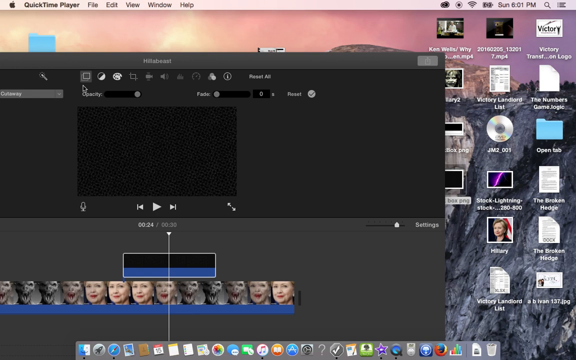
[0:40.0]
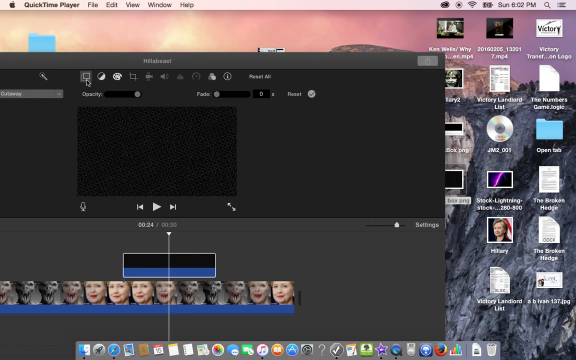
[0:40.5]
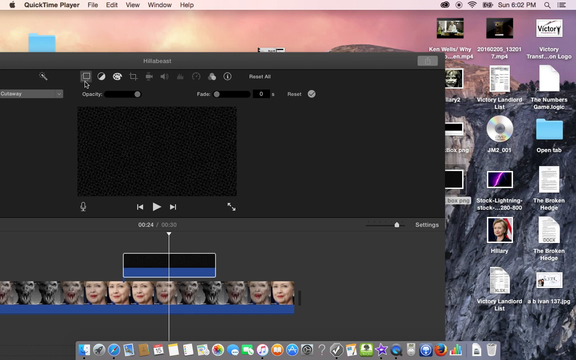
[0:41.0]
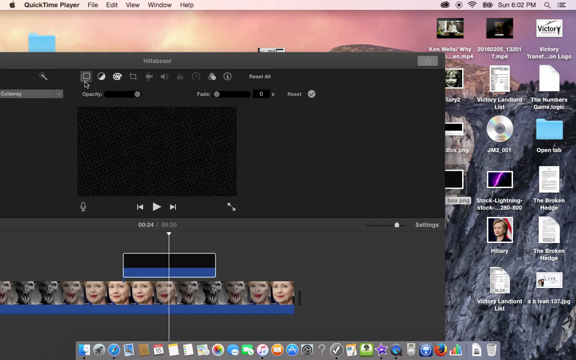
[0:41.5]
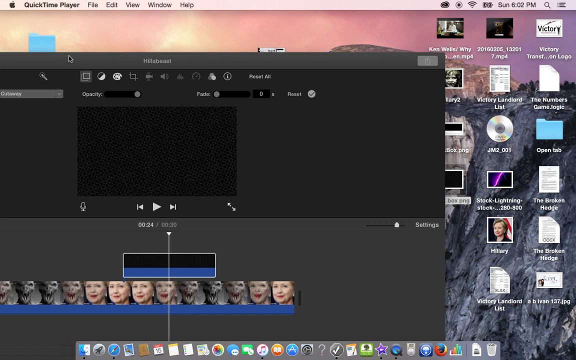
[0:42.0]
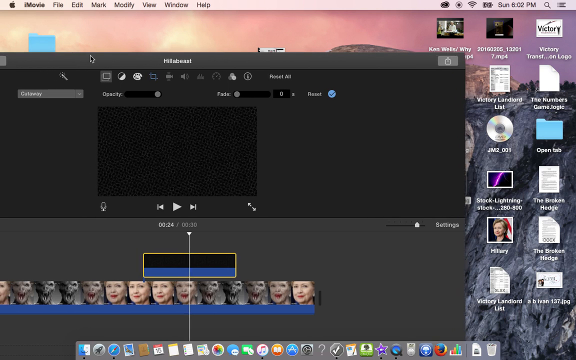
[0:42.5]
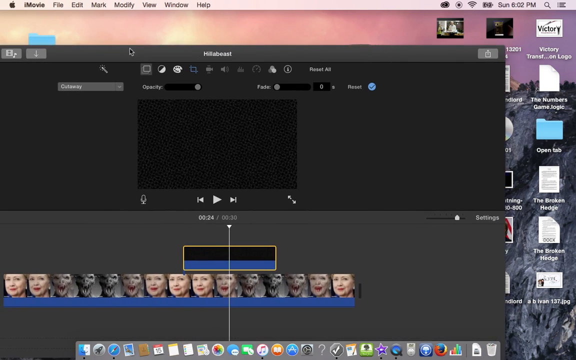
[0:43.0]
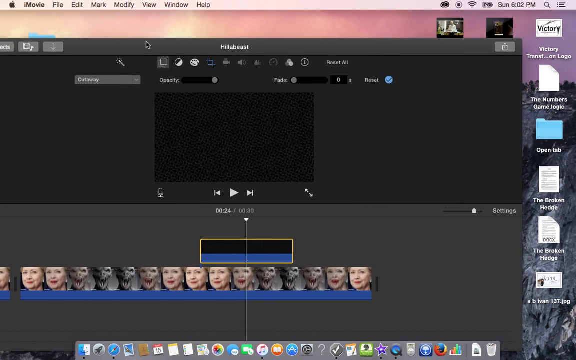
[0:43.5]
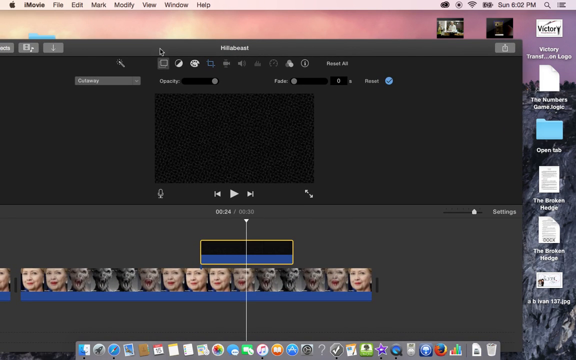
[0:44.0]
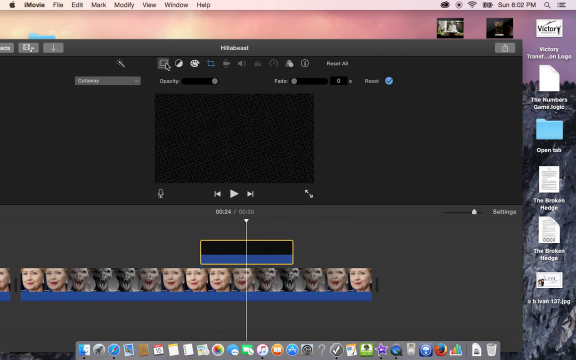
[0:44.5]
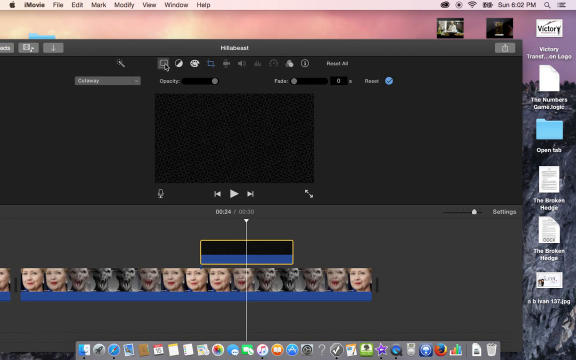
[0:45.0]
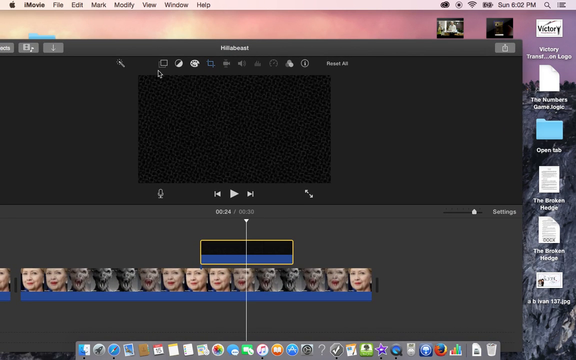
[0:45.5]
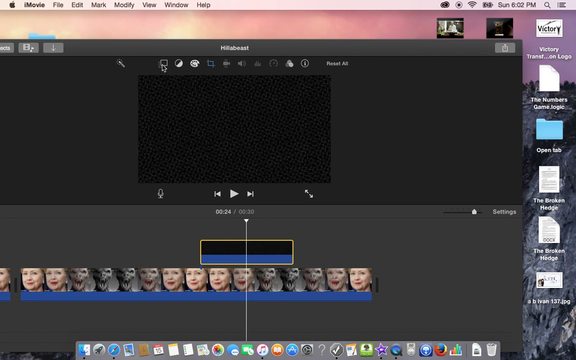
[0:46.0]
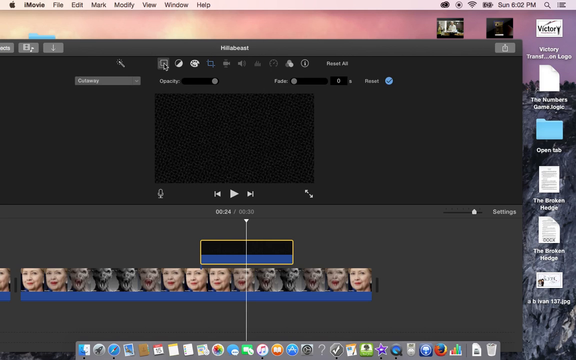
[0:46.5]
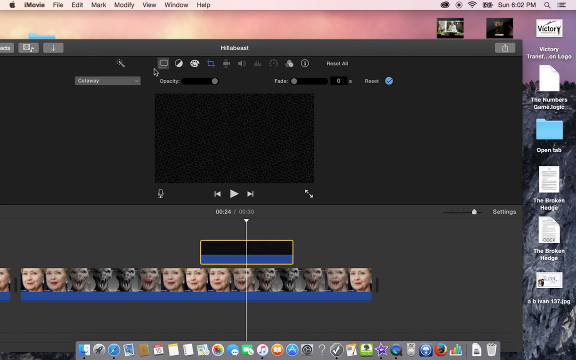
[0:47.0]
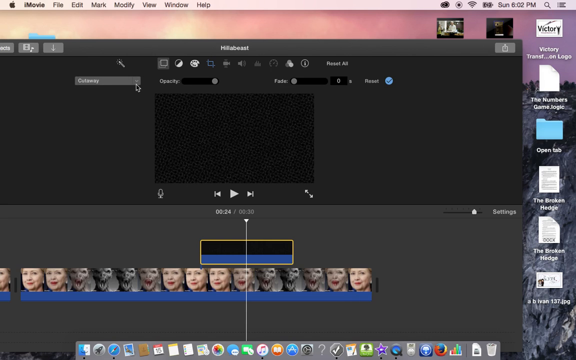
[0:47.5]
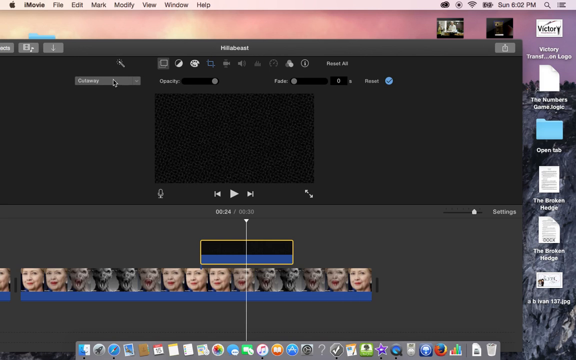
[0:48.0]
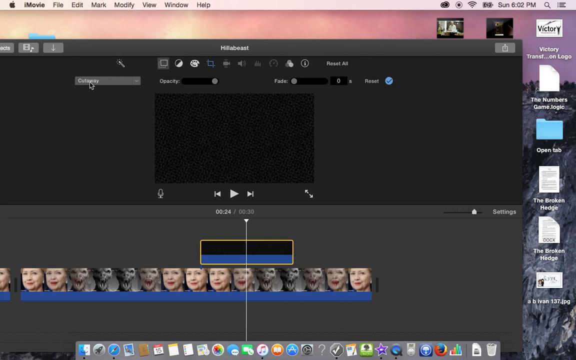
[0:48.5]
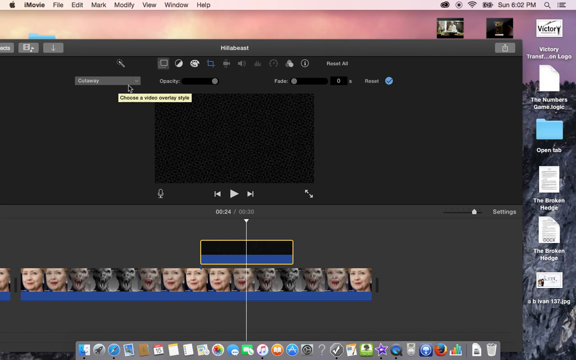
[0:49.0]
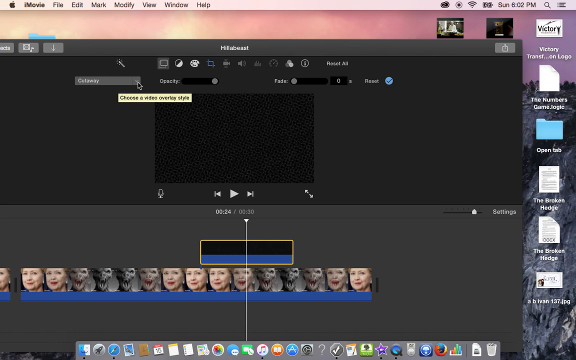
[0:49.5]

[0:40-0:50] A picture of a very ugly animal that looks like a dragon is being edited. At the top of the screen are "QuickTime Player" and the menus File, Edit, View and Window. The device is connected to Wi-Fi, the screen is being recorded, and the day and time read Sunday, 6:01 p.m. On the desktop there are an "open tab" item, a broken image and a picture of Hillary Clinton.